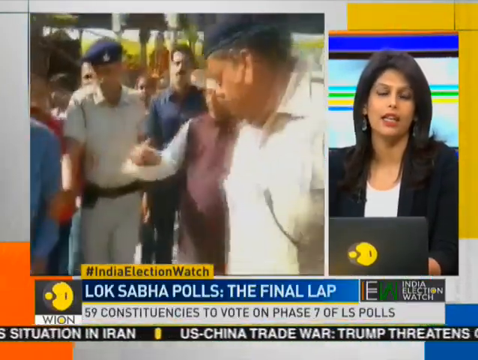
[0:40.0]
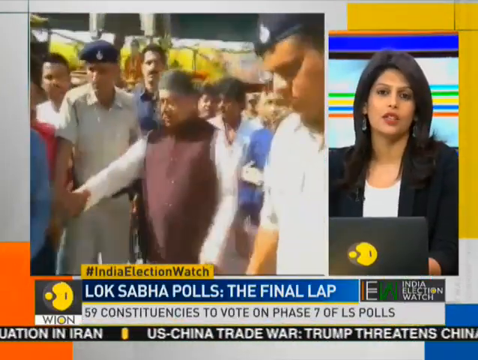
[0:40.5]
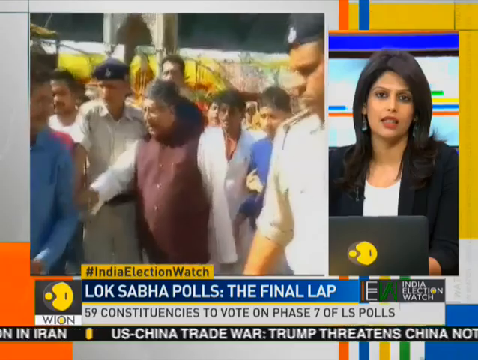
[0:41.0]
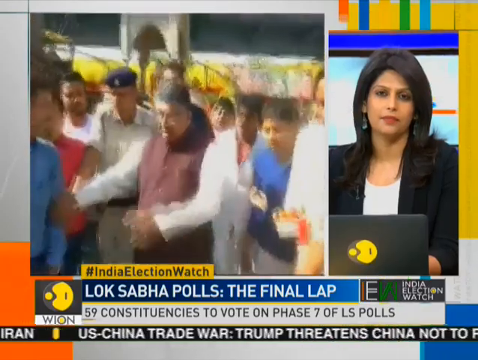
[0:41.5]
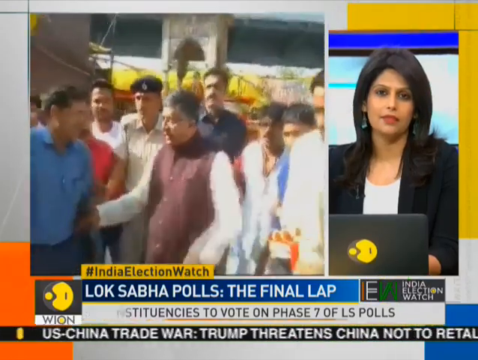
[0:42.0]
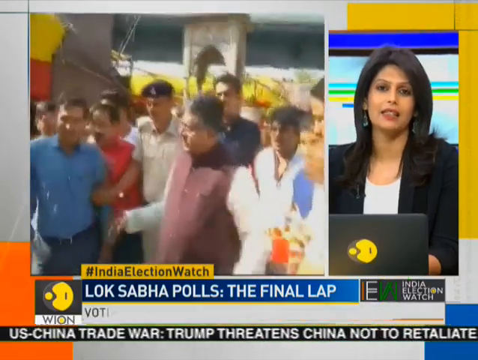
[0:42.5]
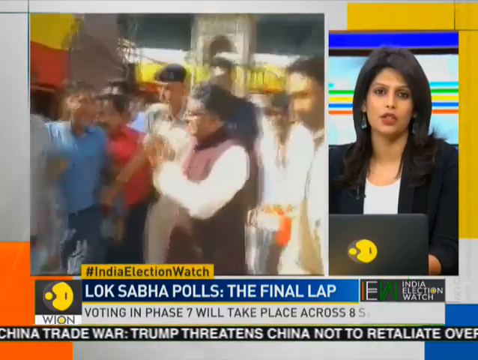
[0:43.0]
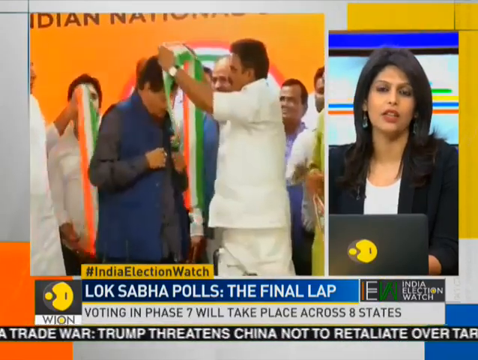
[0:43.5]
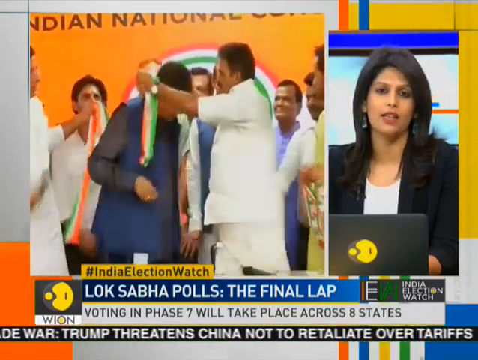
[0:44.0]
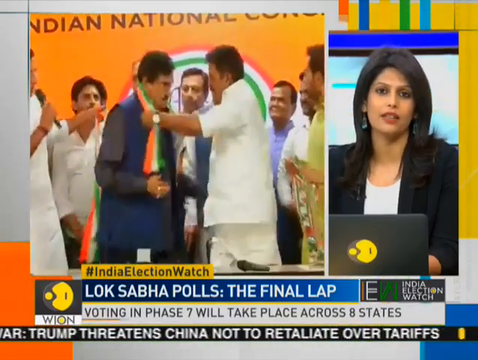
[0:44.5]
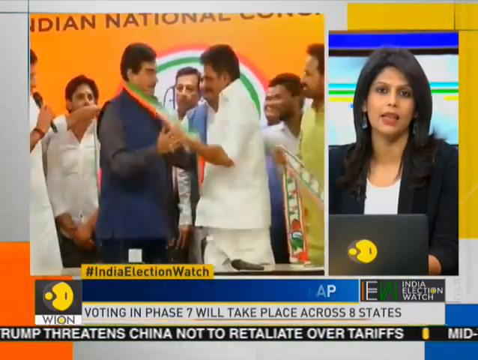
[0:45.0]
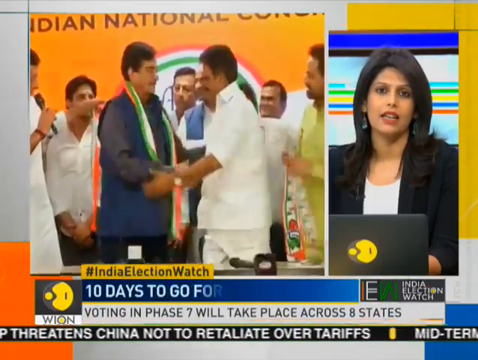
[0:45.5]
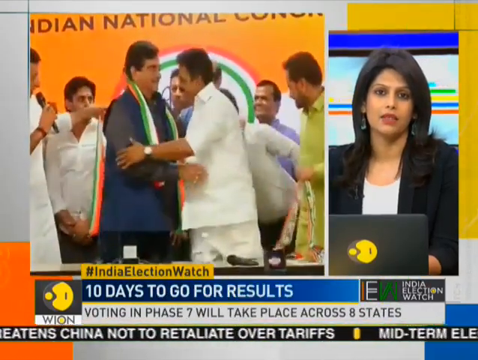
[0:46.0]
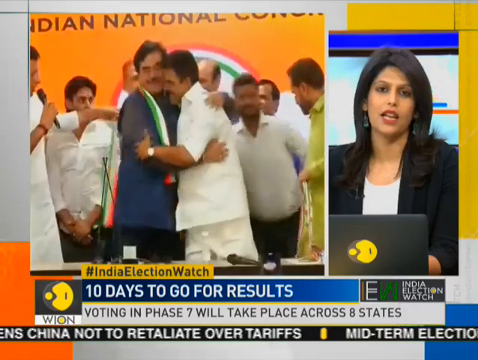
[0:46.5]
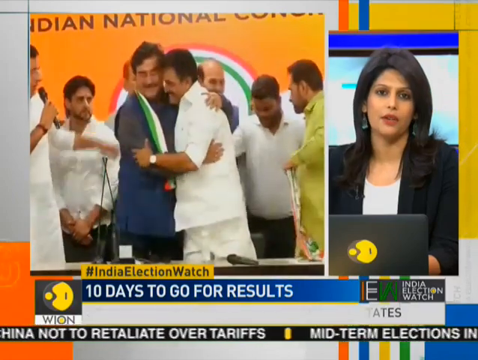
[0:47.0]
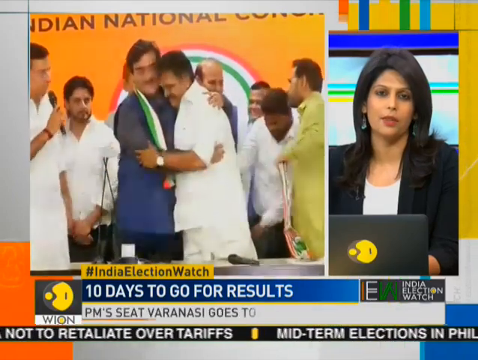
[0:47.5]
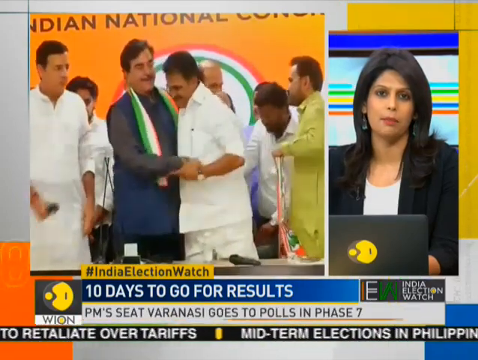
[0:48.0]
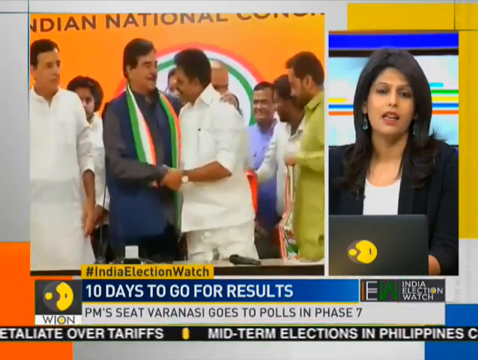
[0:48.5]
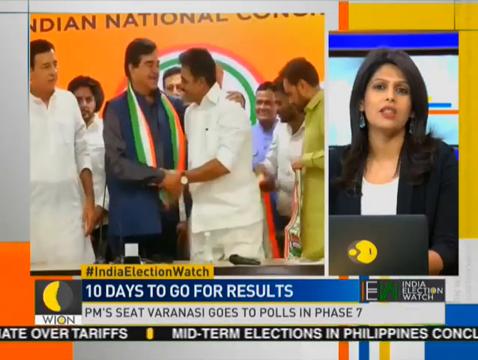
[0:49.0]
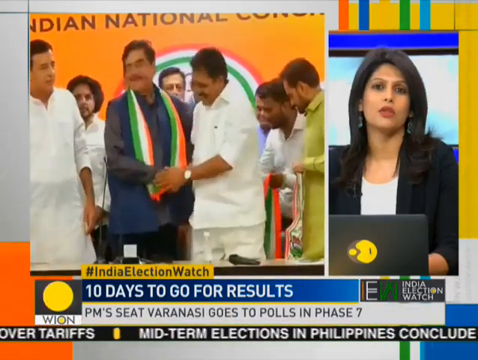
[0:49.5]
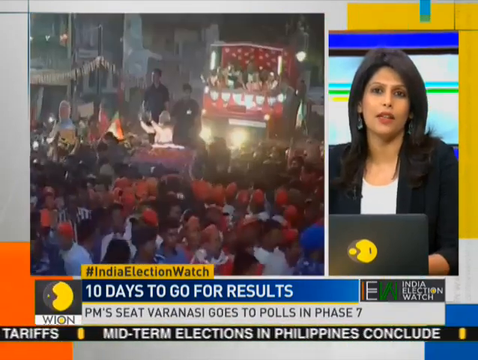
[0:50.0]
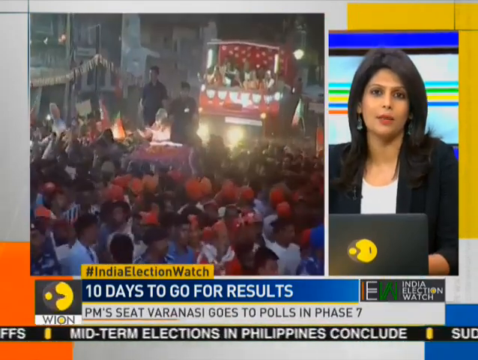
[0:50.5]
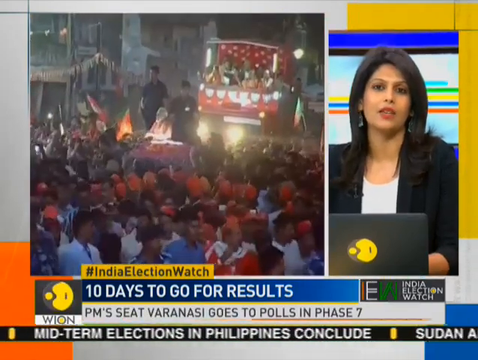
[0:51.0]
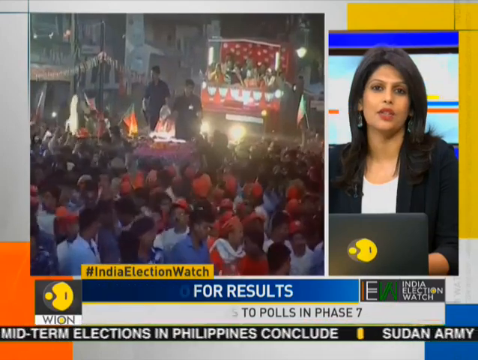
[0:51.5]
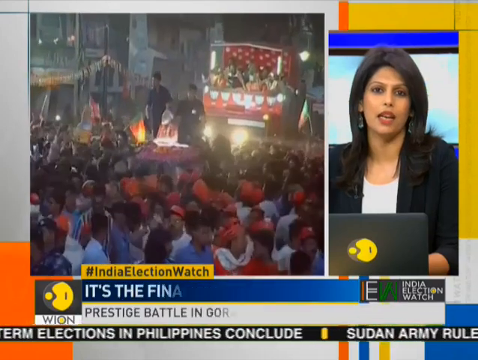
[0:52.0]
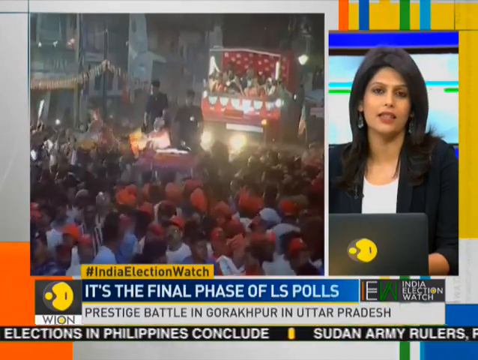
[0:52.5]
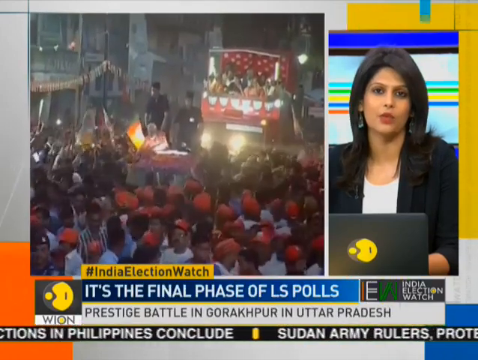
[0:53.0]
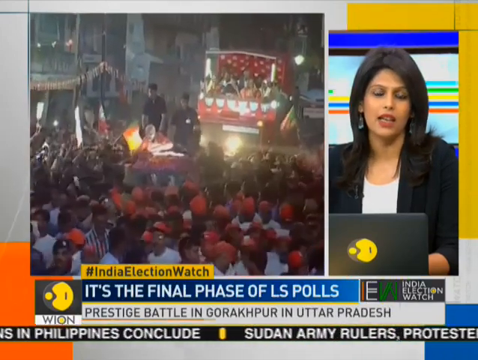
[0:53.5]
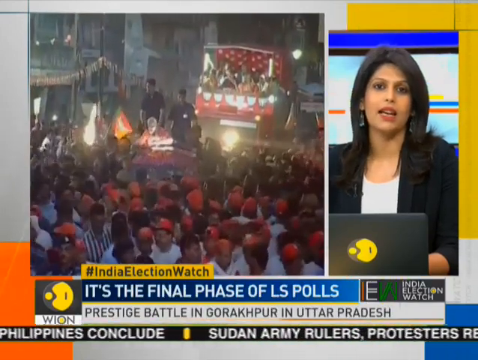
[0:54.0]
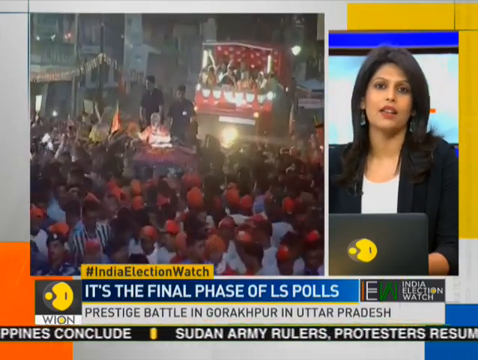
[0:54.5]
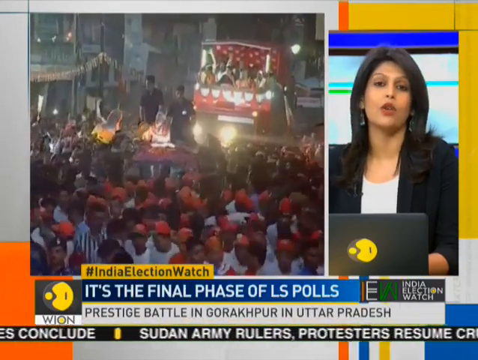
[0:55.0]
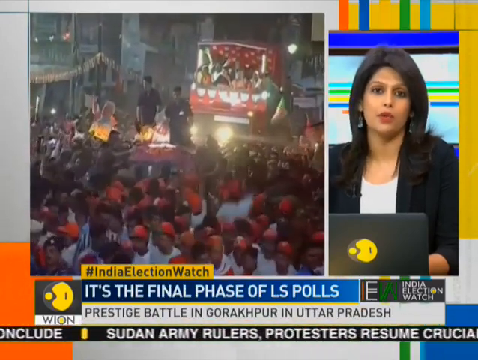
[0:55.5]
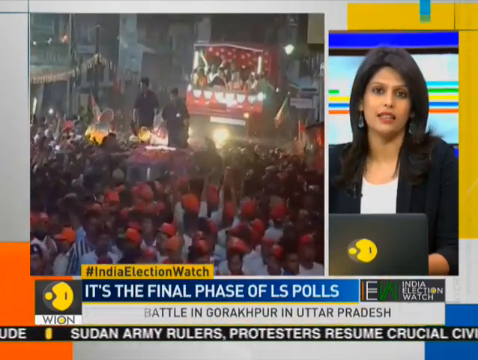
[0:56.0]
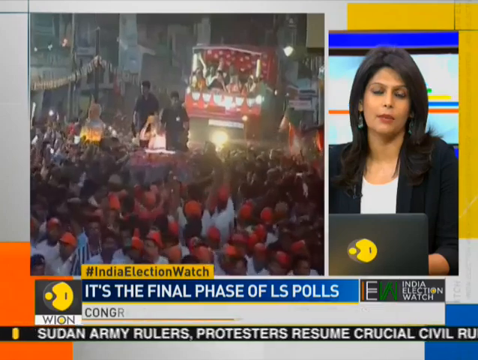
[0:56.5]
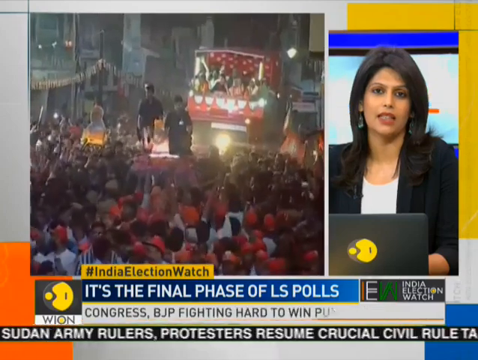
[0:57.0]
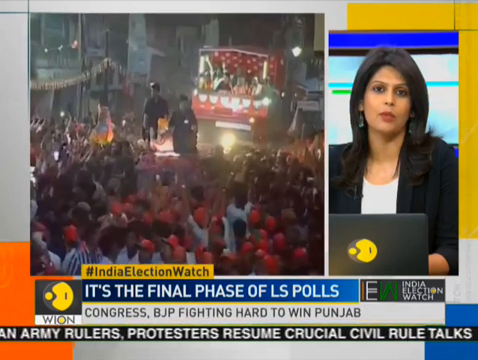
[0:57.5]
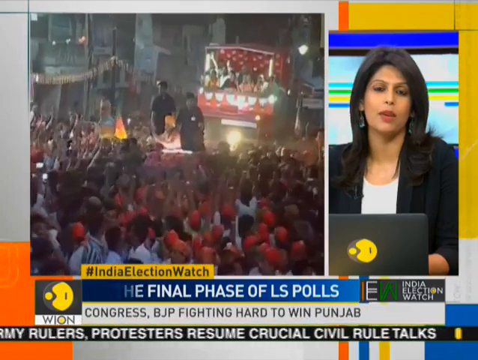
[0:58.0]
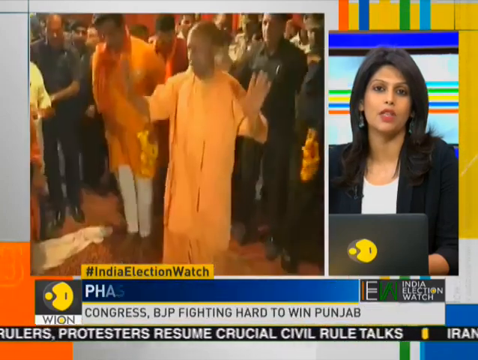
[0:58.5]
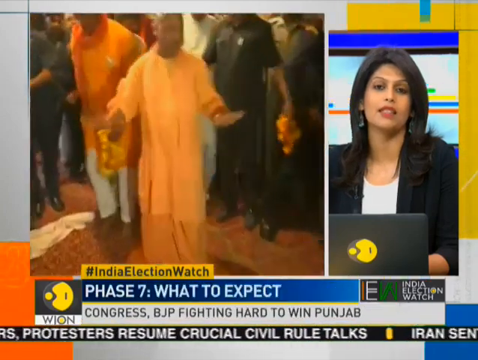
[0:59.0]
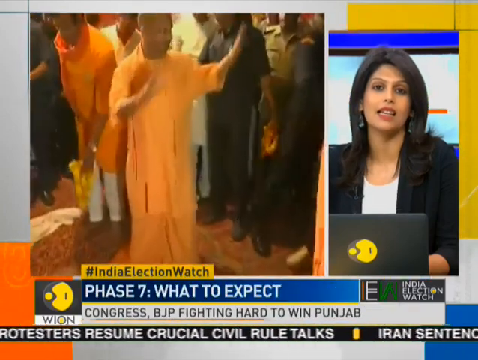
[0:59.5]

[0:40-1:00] The election news broadcast continues with the anchor on the right side in a frame smaller than the one on the left. She wears the same attire, the laptop is there, and the background screens are visible. On the left, the leader is shown where to go by the policeman. Text at the bottom reads "#Indian election watch," "Lok Sabha polls, the final lap" and "15 constituencies vote on phase seven of LS polls." The leader greets other people. The scene shifts to another place, where a person, apparently the leader, is given a medal or a scarf with the Indian flag, and then they hug. People take pictures; some wear all white, others all green and all blue. Lights flash from the paparazzi, and they shake hands. A night scene follows, with a bus at the back carrying people and many people on the street, apparently cheering for the newly elected leader. In another place, a person who looks like a monk greets people, and behind him are two people wearing all black, apparently policemen.